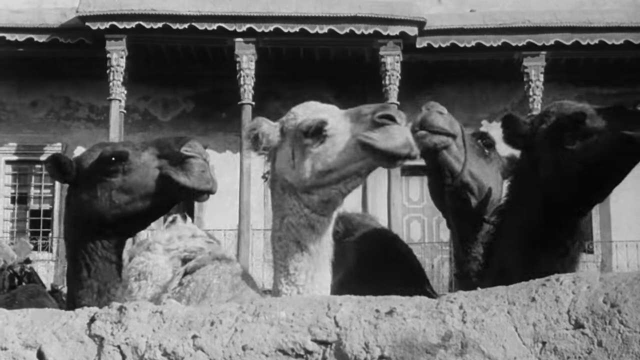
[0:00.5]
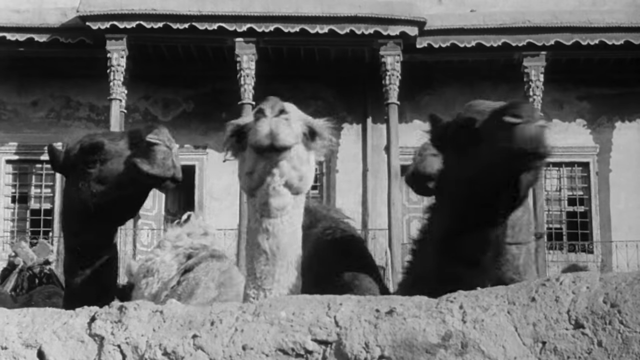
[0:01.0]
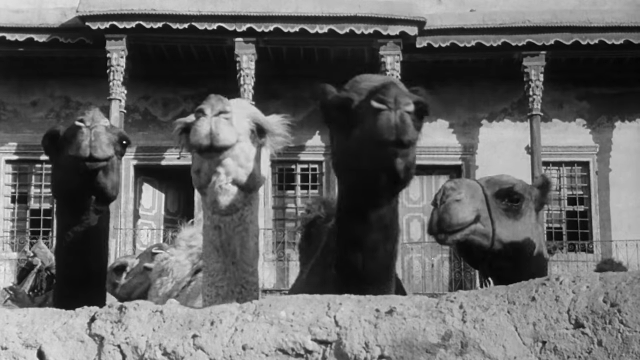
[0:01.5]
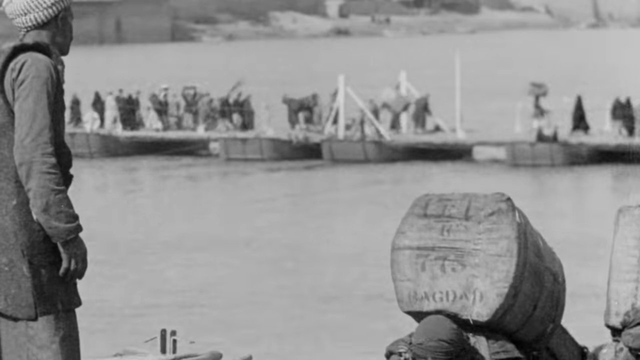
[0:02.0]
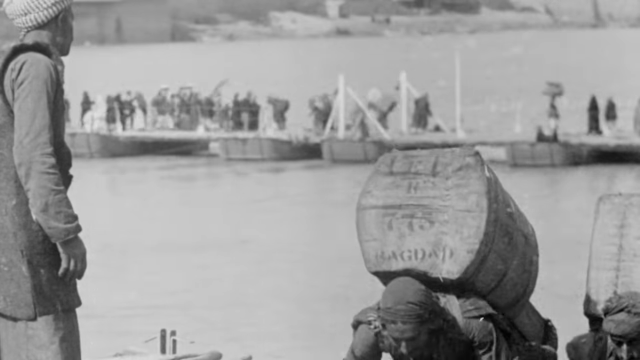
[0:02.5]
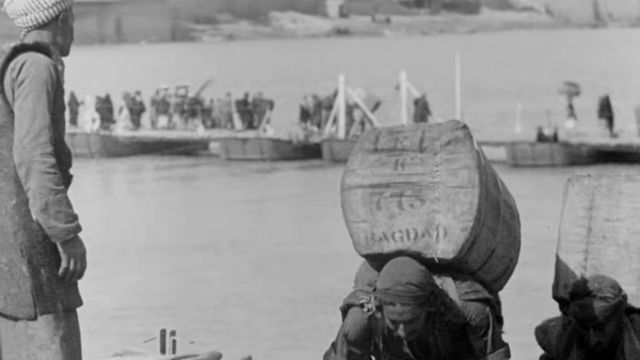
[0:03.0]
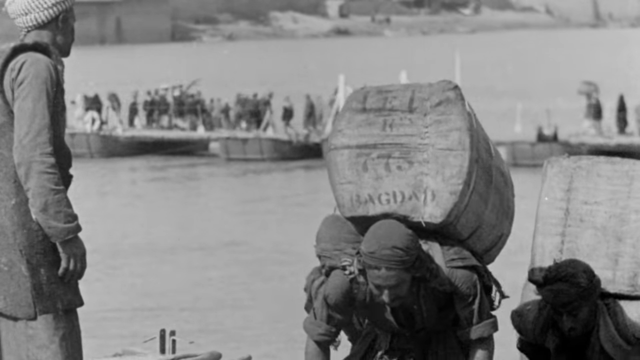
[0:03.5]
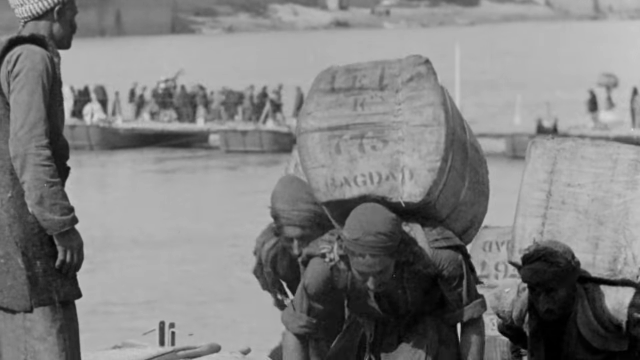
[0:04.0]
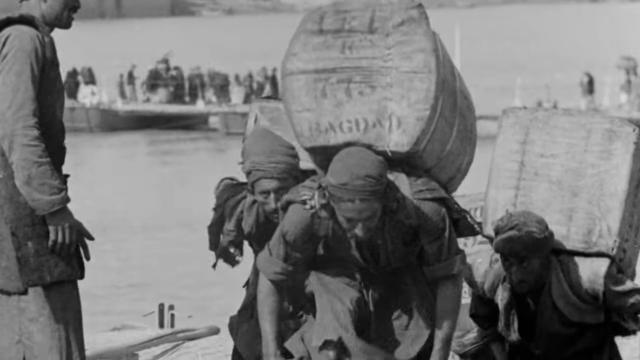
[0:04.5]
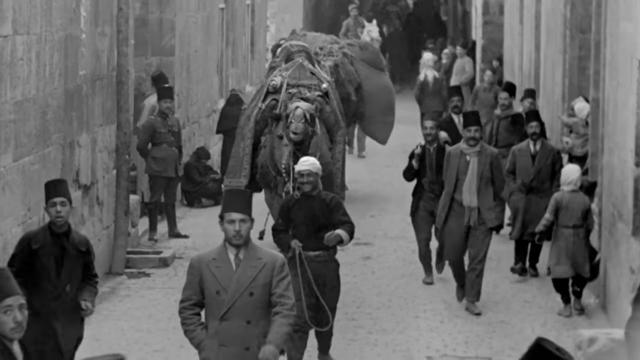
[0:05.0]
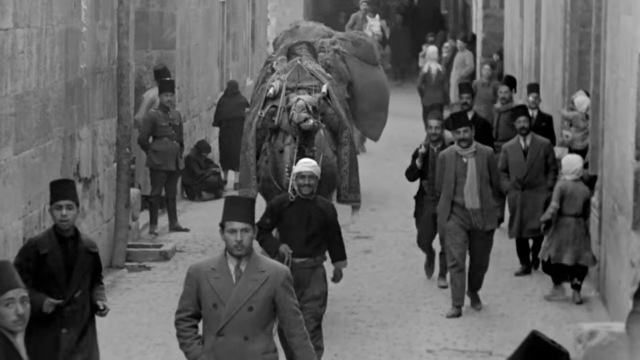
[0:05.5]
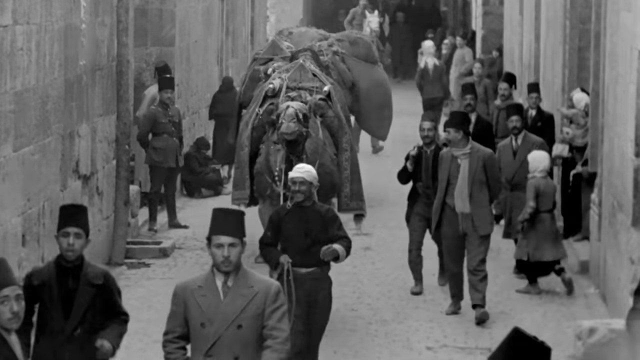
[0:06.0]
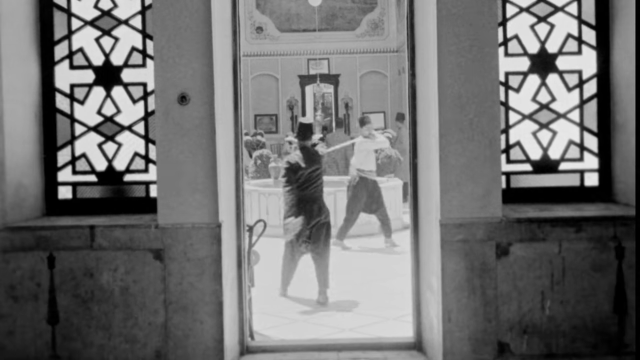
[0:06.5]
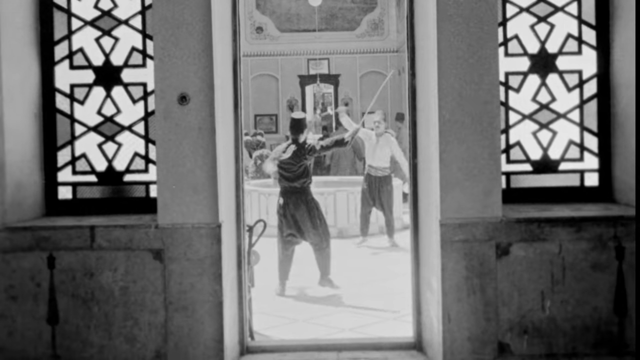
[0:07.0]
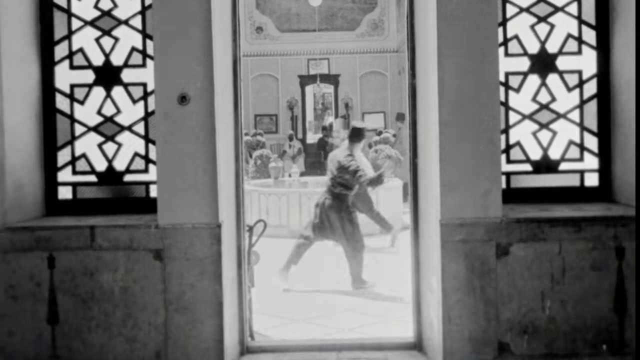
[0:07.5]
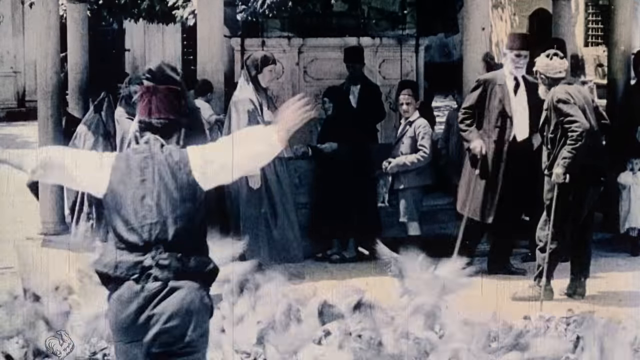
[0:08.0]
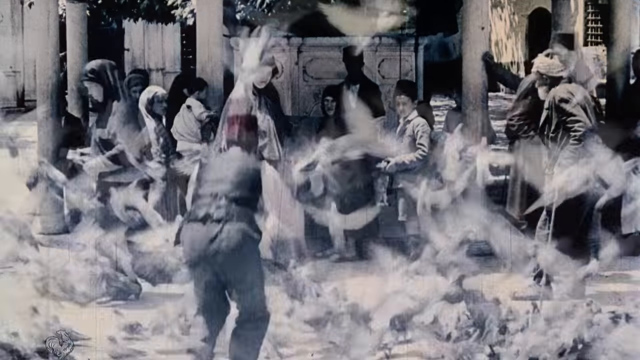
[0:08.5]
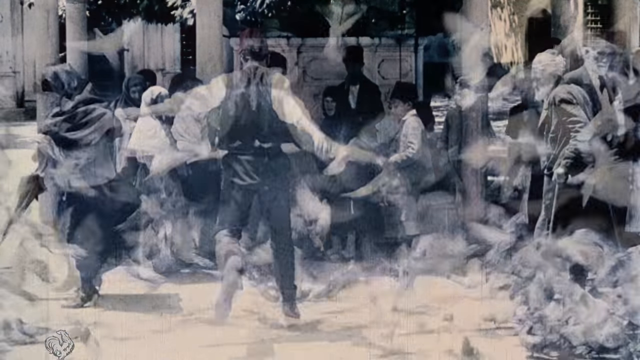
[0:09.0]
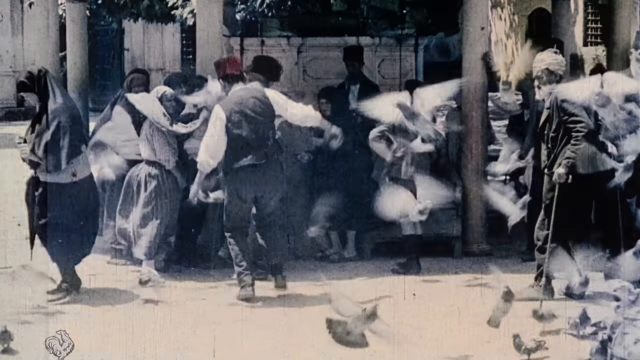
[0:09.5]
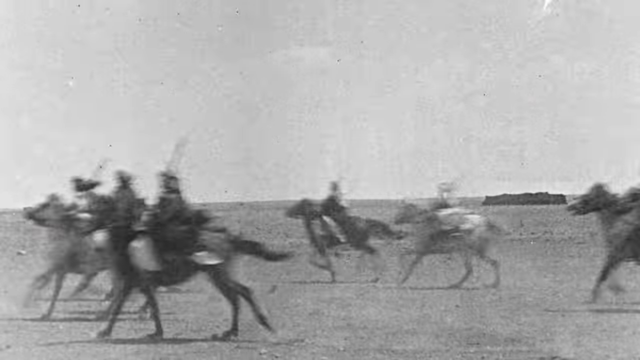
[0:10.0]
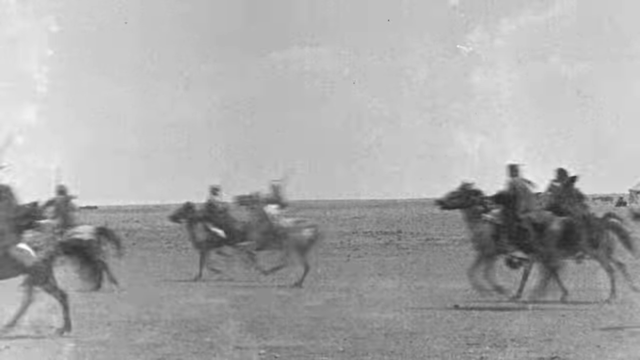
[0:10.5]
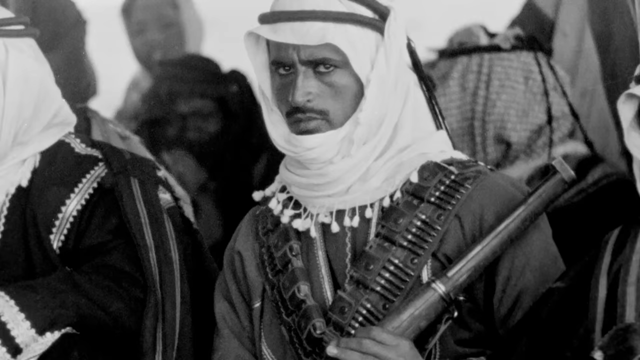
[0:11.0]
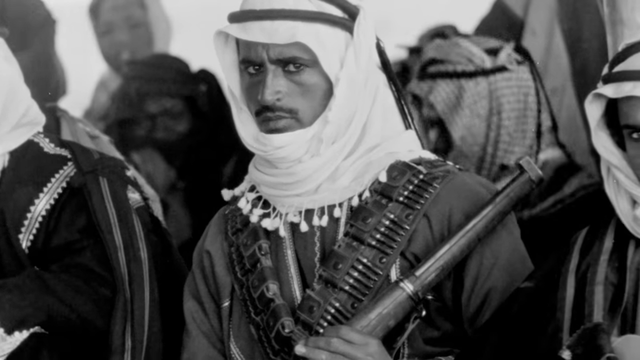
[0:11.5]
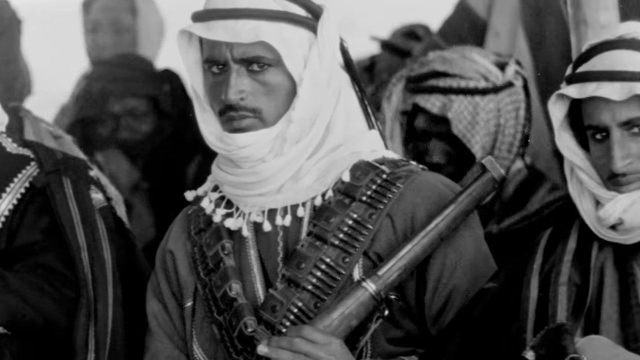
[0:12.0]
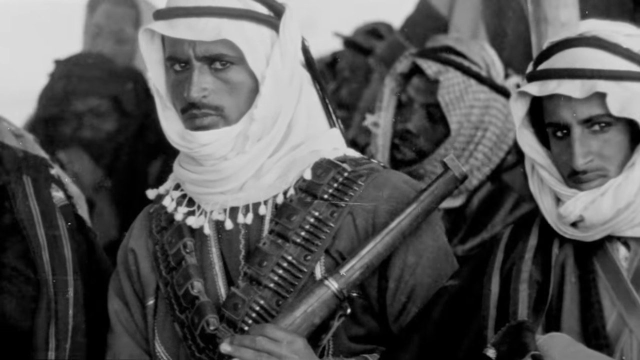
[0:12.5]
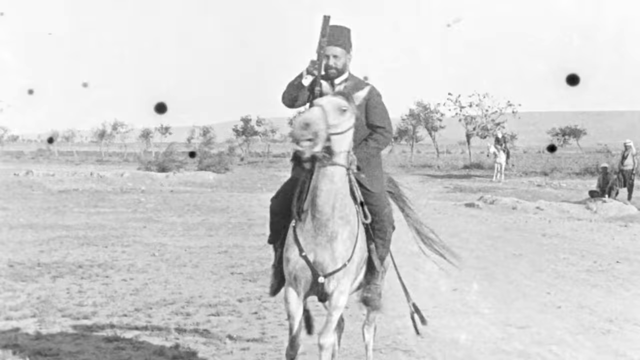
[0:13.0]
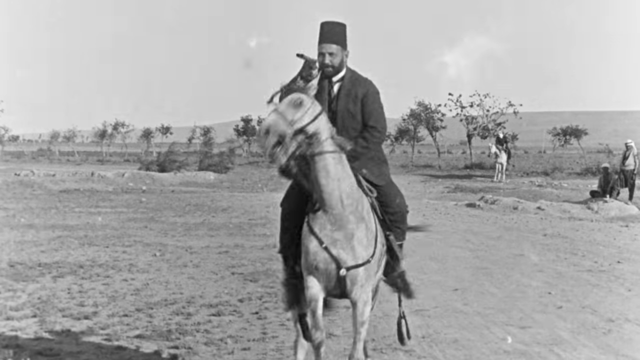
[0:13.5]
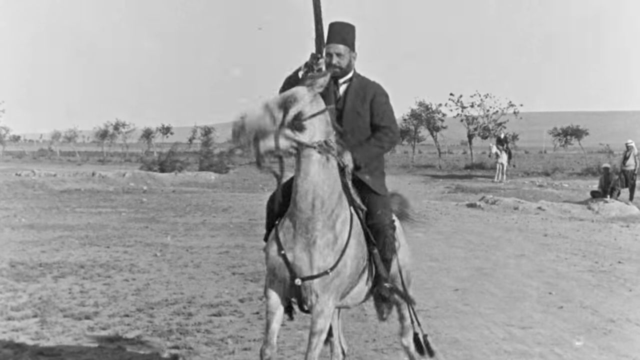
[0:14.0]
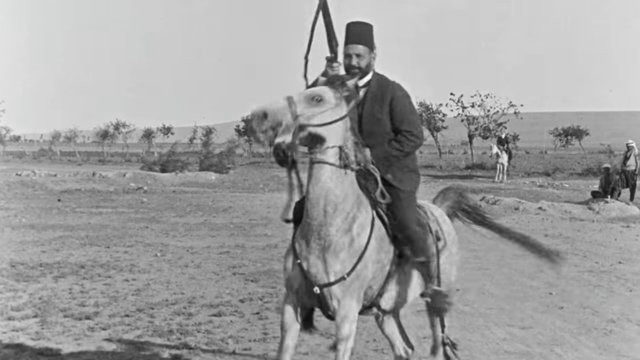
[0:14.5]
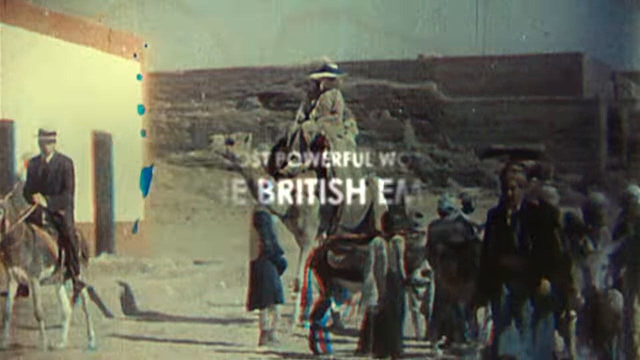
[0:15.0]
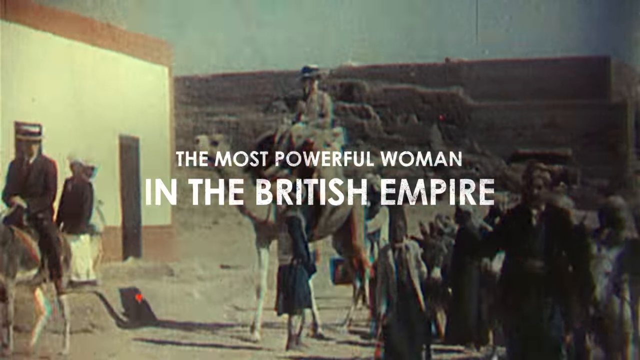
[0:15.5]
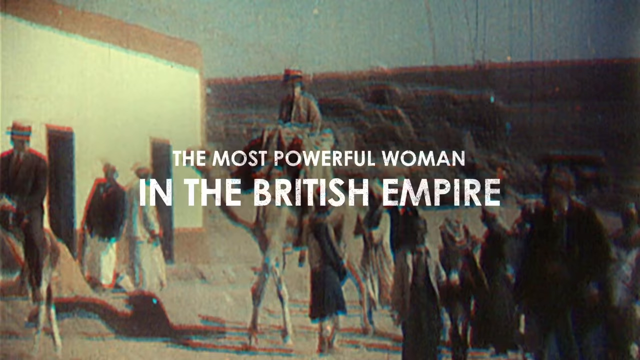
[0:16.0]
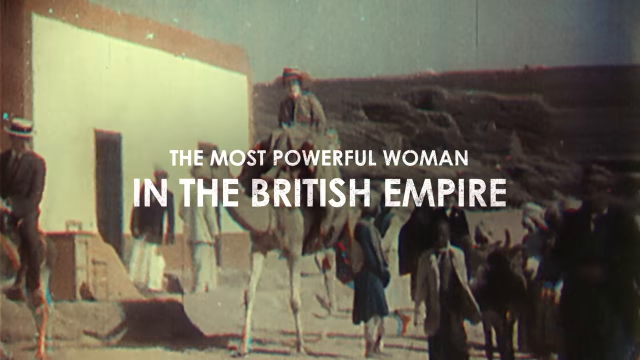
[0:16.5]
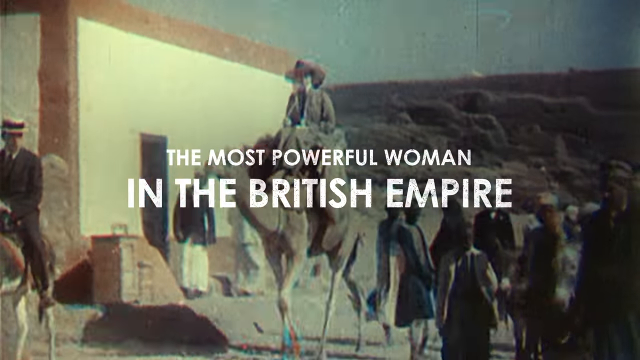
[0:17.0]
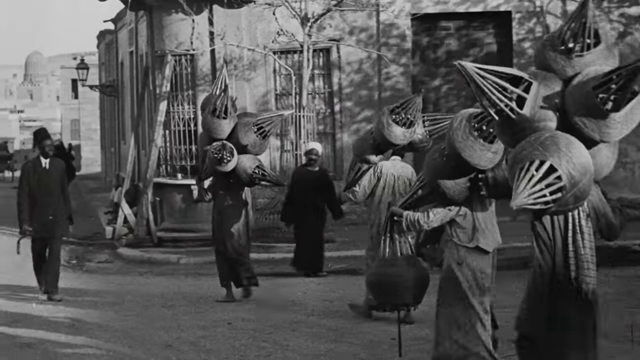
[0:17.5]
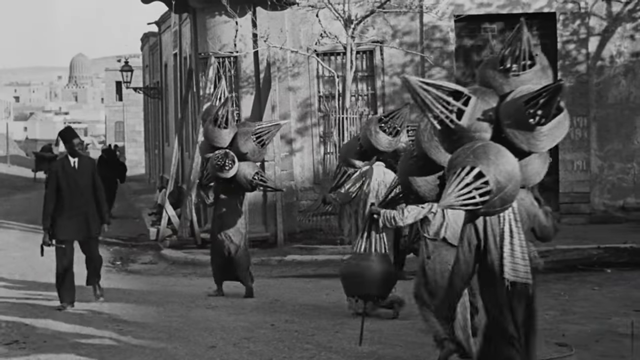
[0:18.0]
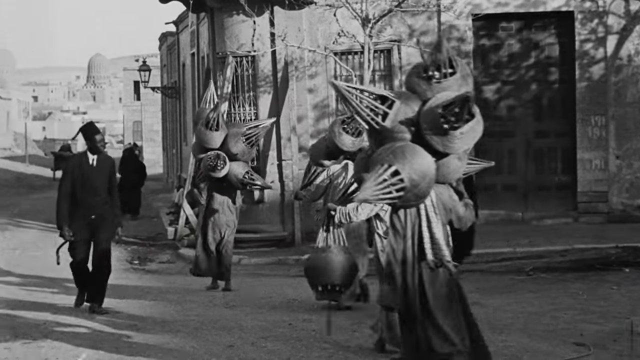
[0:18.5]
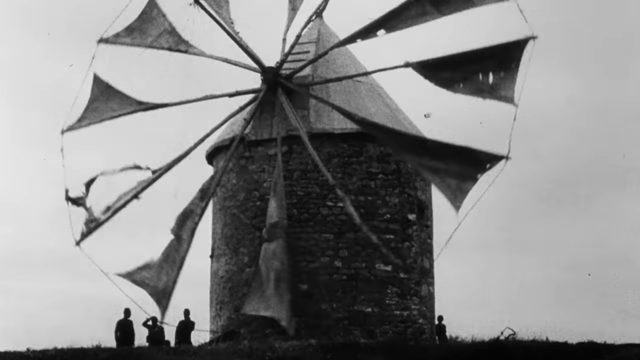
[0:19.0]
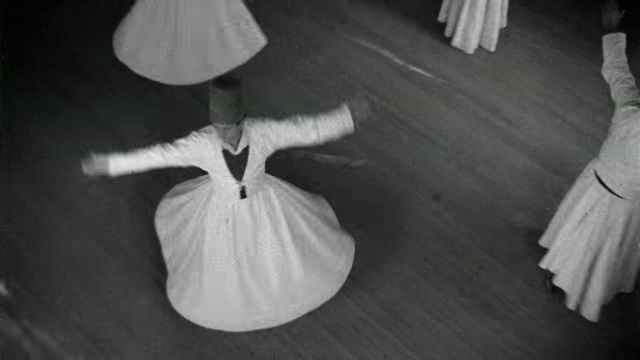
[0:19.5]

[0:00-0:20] The video opens with a black-and-white image of the heads of a few camels. It transitions to the edge of a waterway, where men carry crates on their backs, and then to a city street with mainly men on it; no women can be made out. Still in black and white, a camel walks toward the camera, its back packed with bags and other items. The society is Islamic and appears to be Moroccan, and the men wear fezzes. Next comes a desert scene in which a stampede of camels moves from the right side of the screen to the left, all in older black-and-white footage. Then there are soldiers wearing turbans with tassels, holding rifles and wearing ammunition across their chests; the camera focuses on one of them, who has a stern look in his eye. The footage then transitions to color, showing a woman on a camel, with text that reads "the most powerful woman in the British Empire."